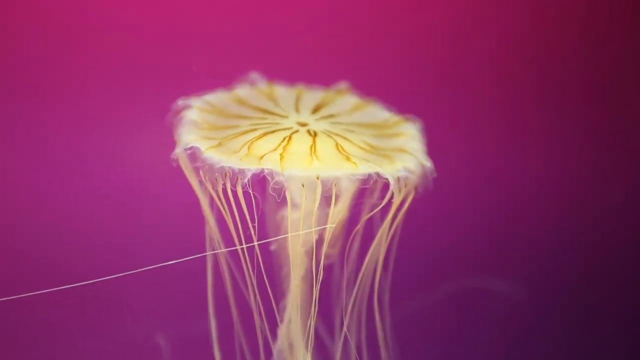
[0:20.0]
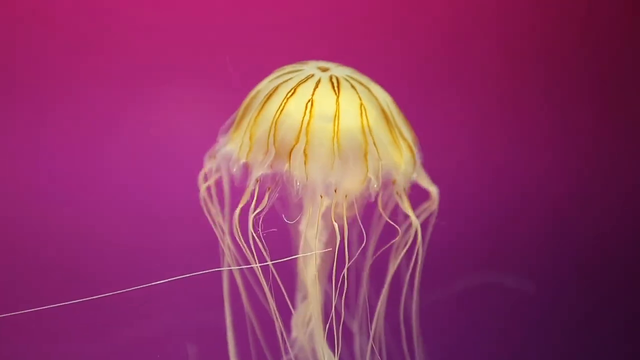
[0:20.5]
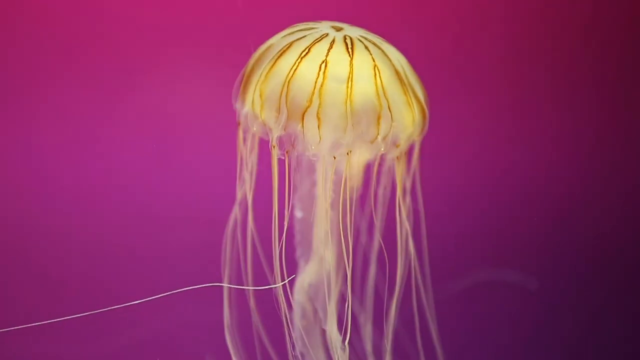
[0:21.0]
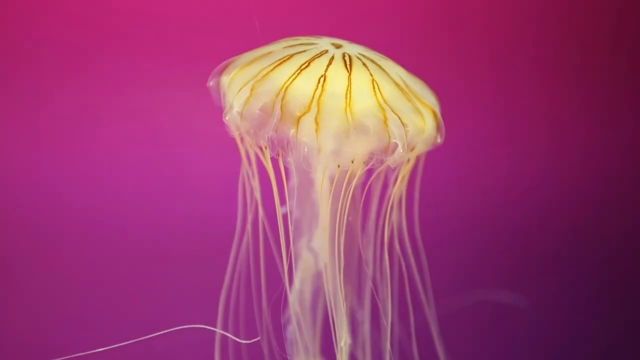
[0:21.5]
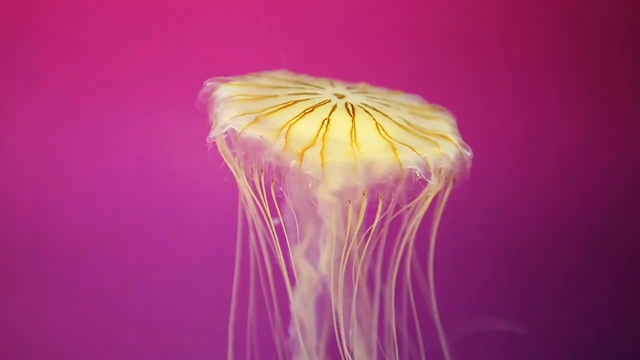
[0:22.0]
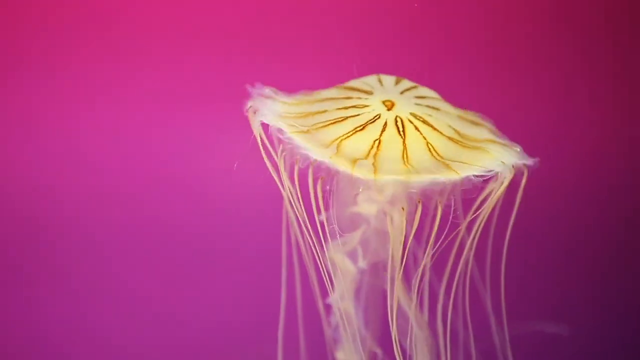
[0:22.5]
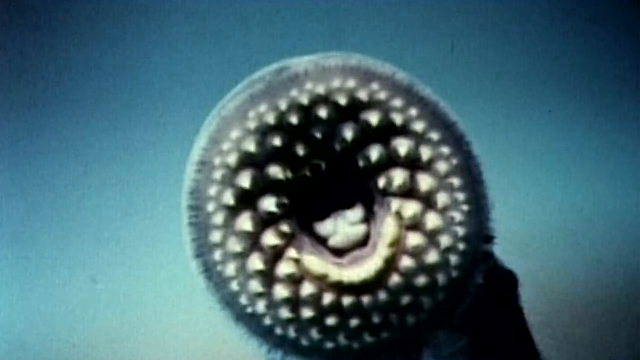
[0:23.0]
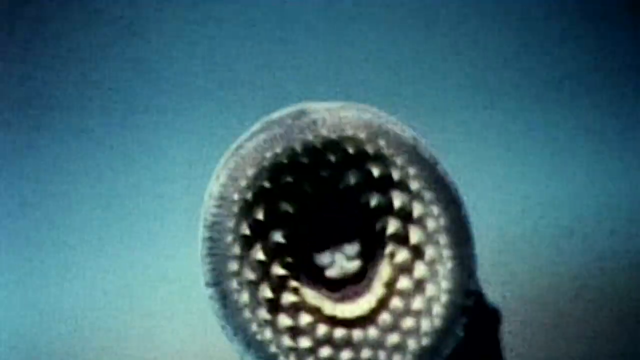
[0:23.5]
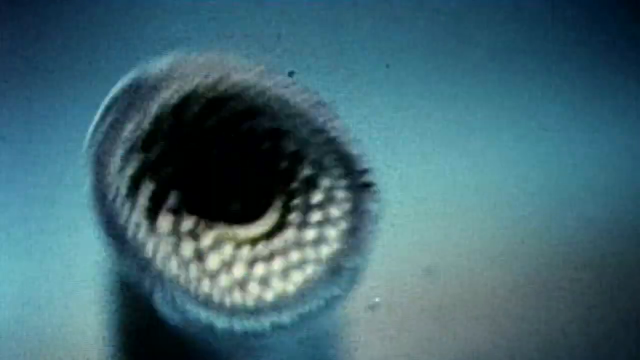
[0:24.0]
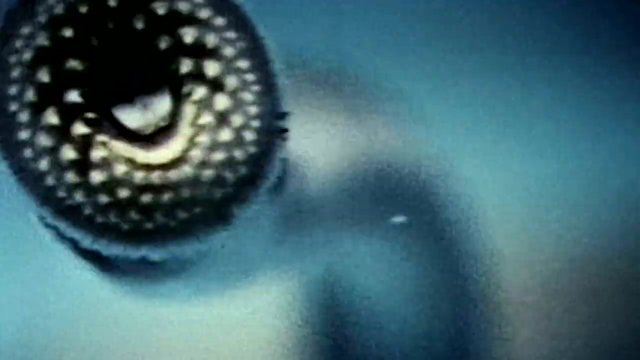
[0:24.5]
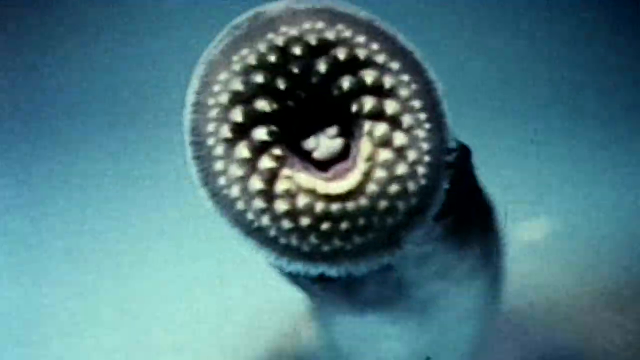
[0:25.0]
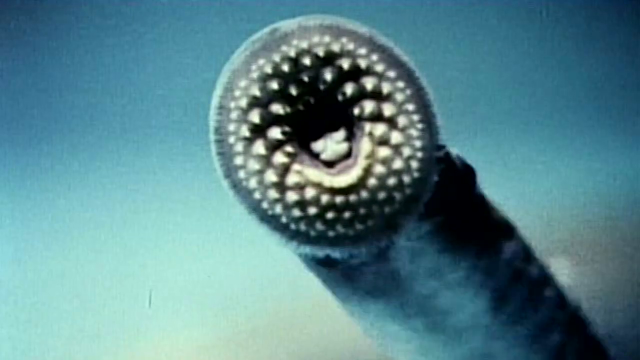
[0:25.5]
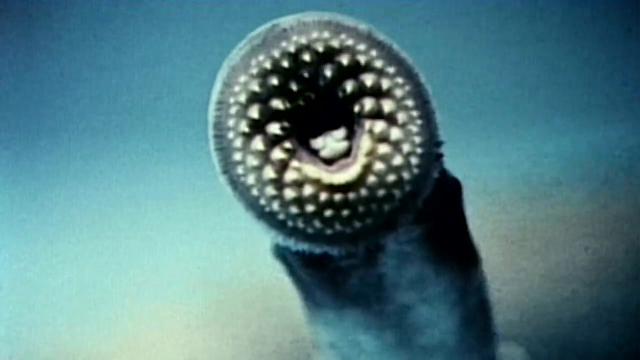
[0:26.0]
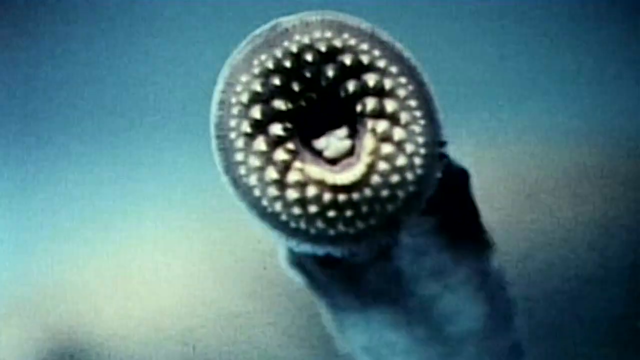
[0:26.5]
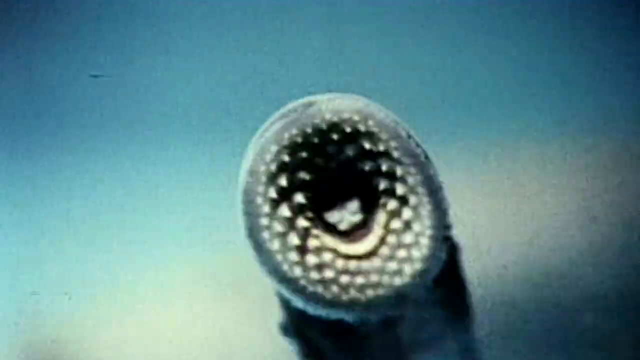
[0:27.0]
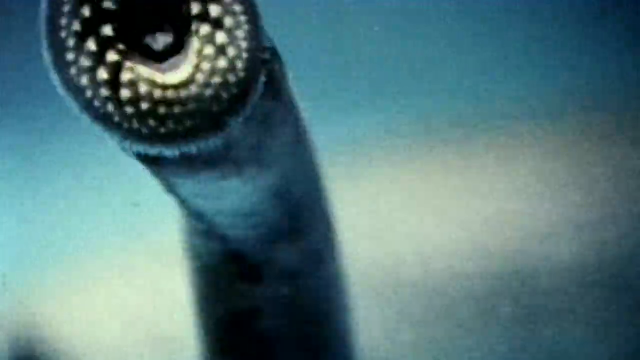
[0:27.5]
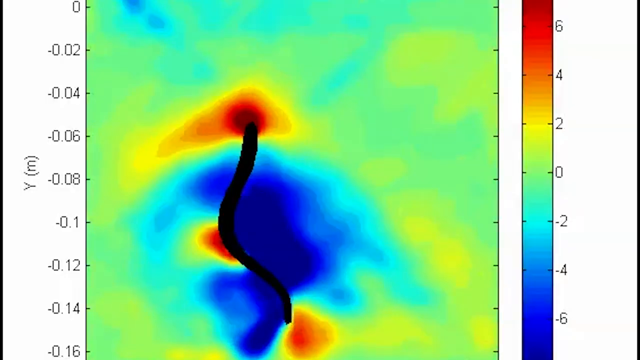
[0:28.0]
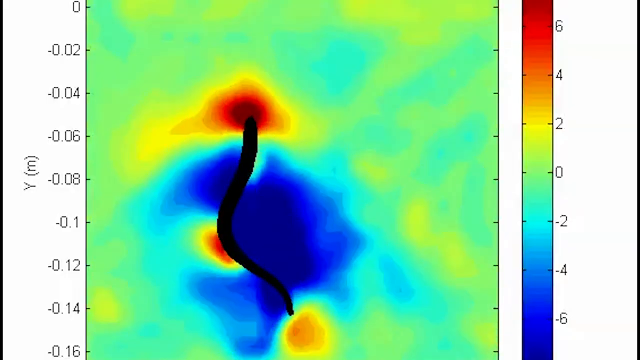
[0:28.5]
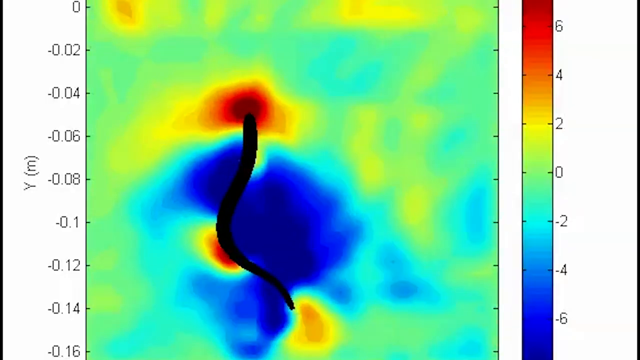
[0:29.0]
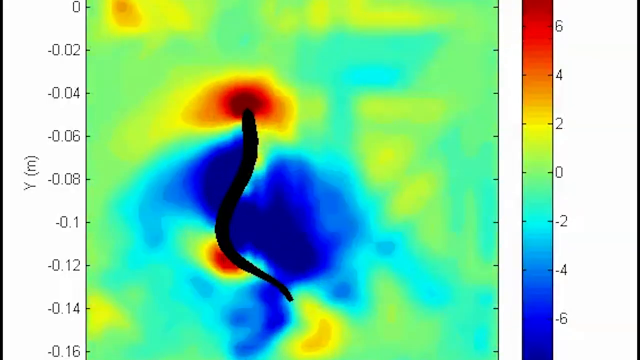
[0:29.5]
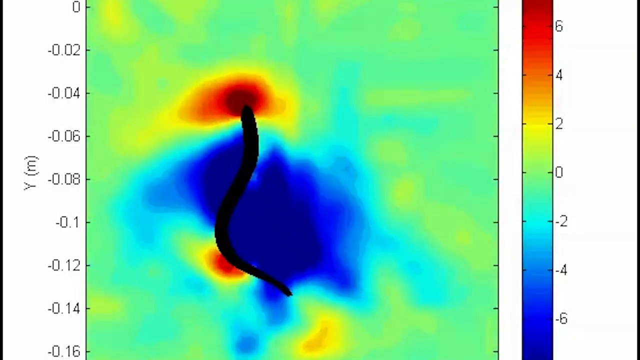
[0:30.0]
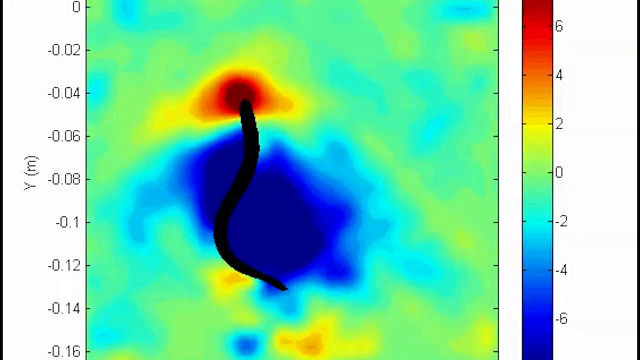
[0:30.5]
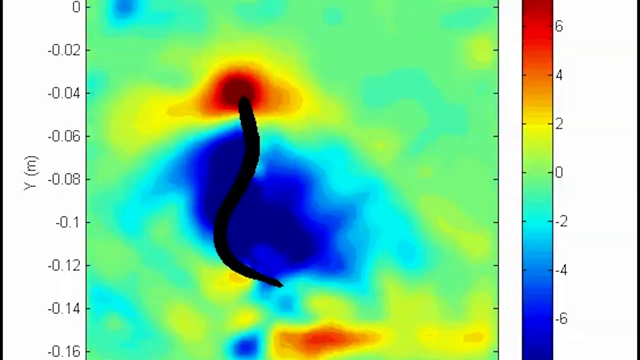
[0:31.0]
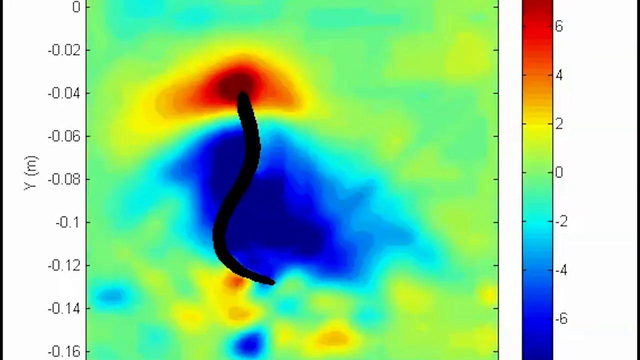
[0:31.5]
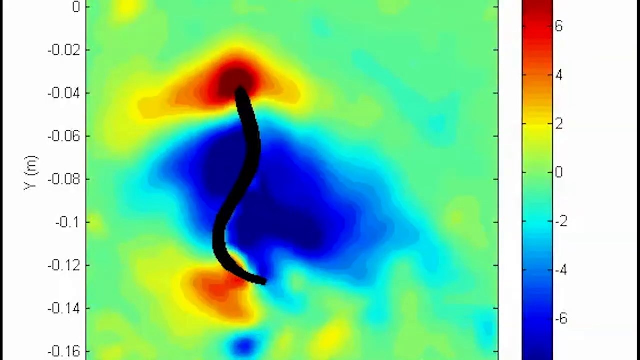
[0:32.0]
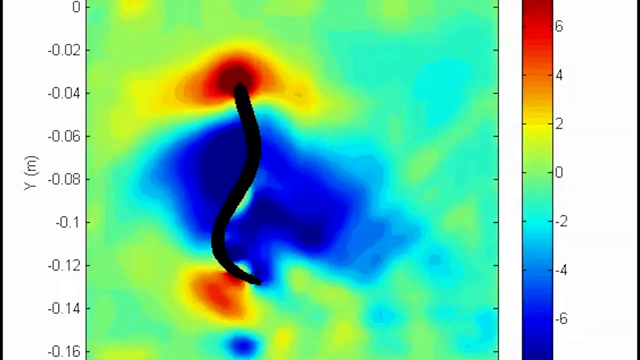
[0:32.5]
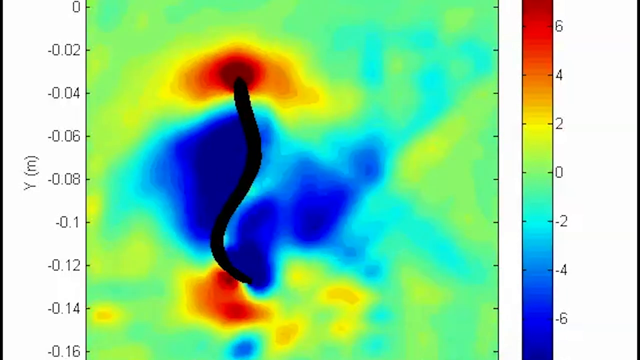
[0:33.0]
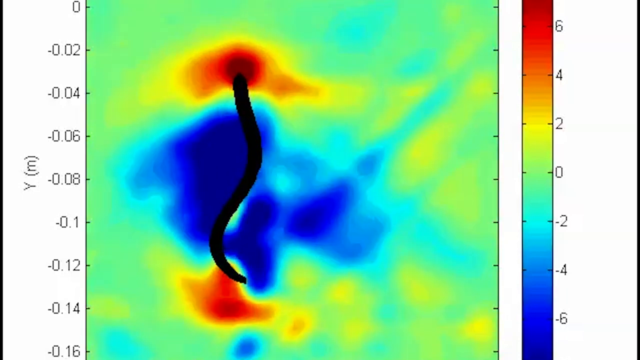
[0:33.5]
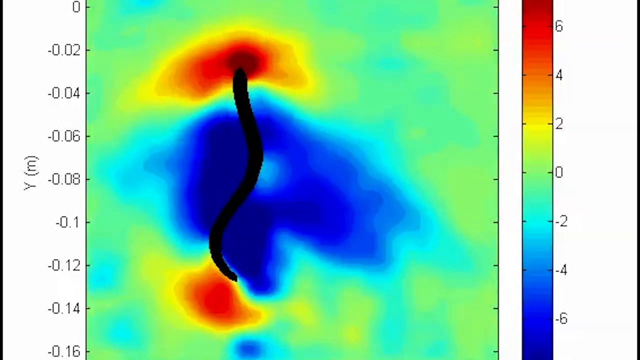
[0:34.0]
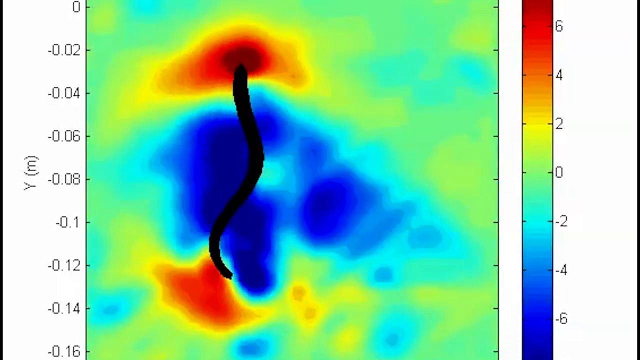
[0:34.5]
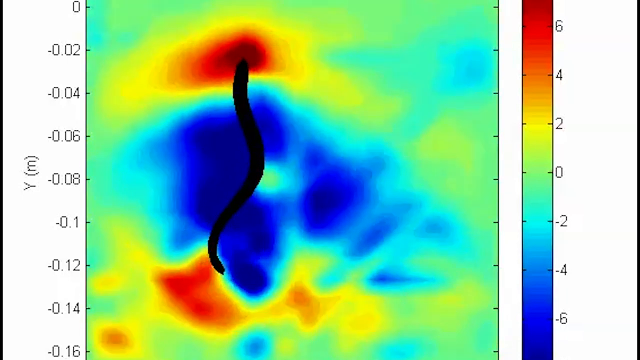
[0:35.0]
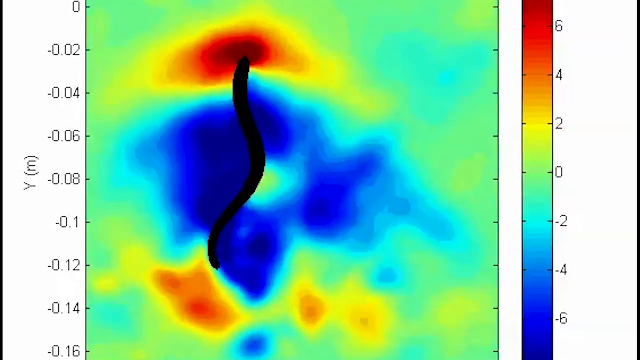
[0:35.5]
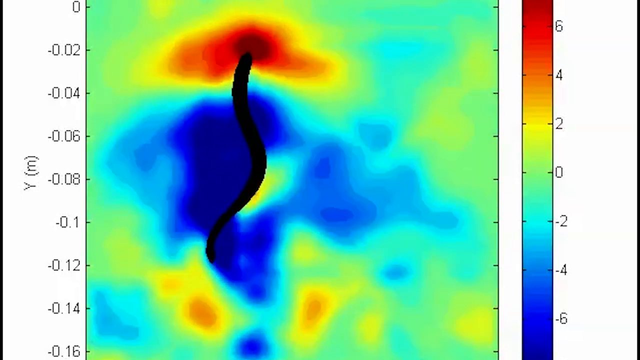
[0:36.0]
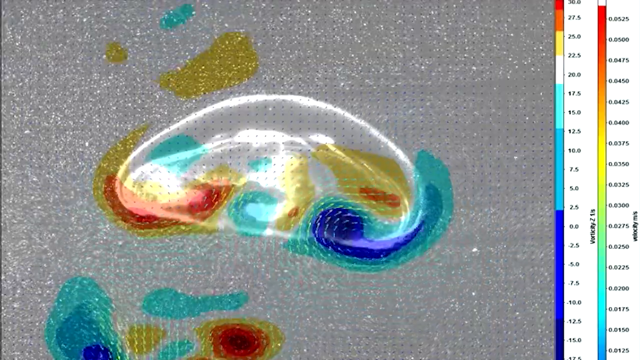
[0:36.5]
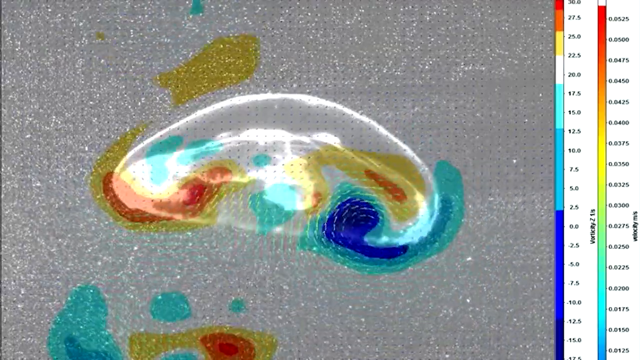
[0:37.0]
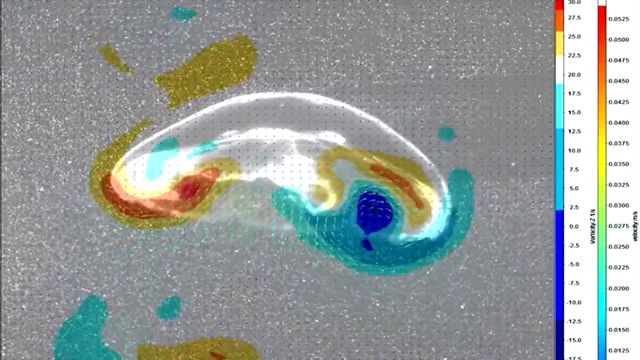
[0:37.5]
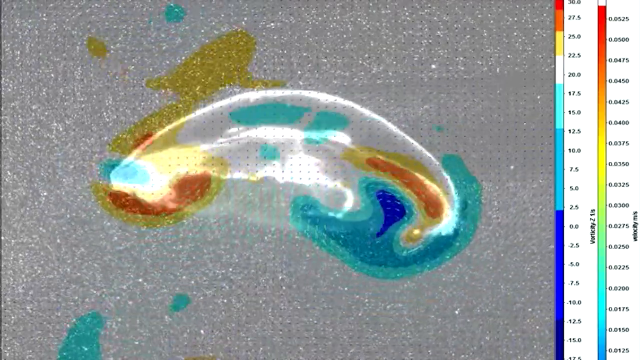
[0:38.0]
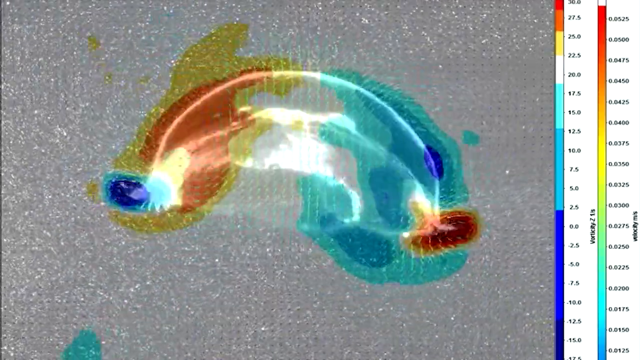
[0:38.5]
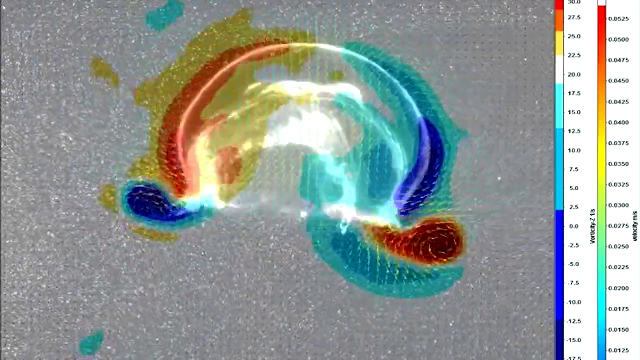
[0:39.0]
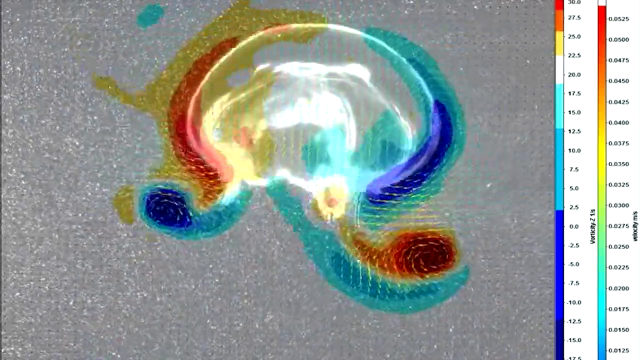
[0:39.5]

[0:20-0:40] A golden, many-tentacled jellyfish swims on a pink background. The image cuts to what appears to be the interior of the mouth of a lamprey or another species of suckerfish; its mouth appears to be attached to the camera lens, so the interior workings of the mouth are visible. Next comes a graph that appears to show the movement pattern of a fish or eel against a multicolored background. It is followed by a different graph with similar coloration that appears to show the movement of a jellyfish. No legible text explains what the graphics depict.